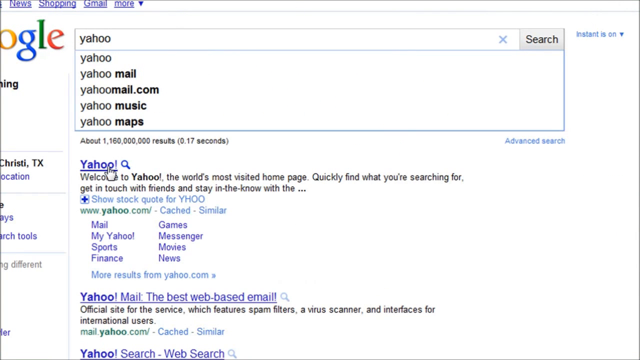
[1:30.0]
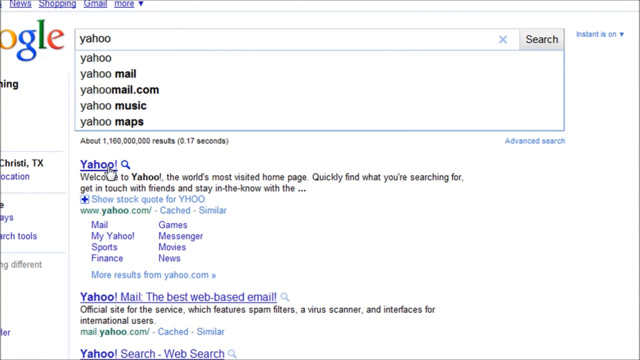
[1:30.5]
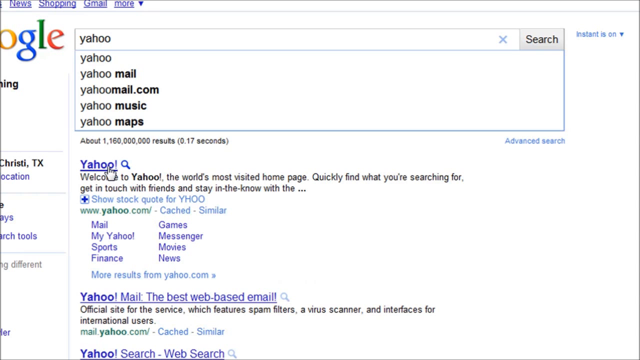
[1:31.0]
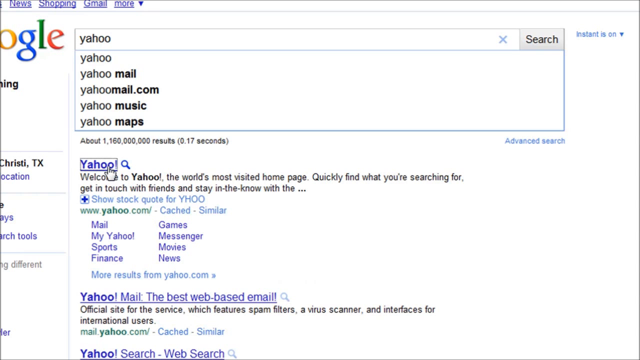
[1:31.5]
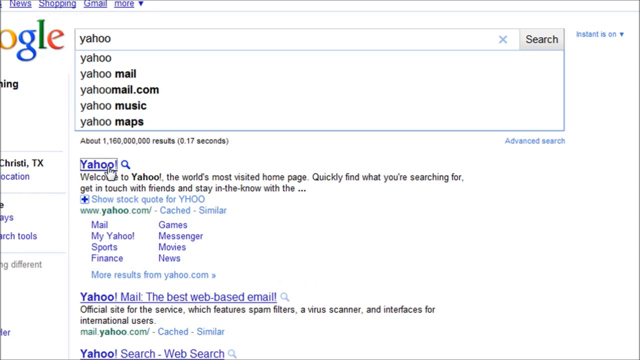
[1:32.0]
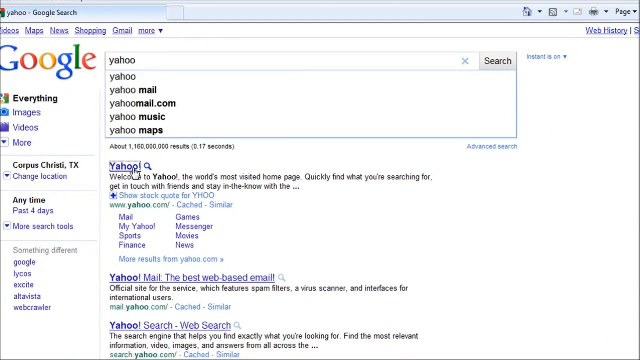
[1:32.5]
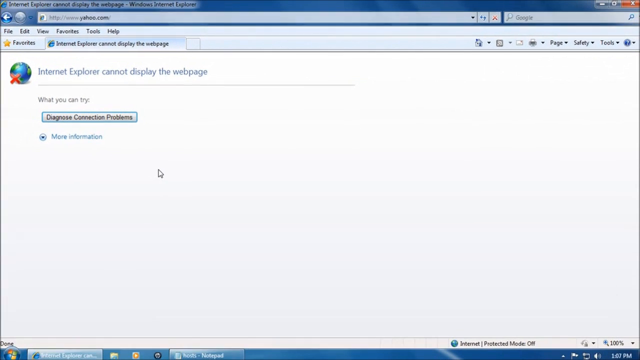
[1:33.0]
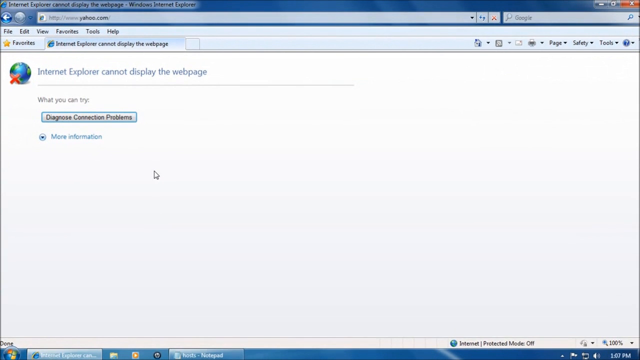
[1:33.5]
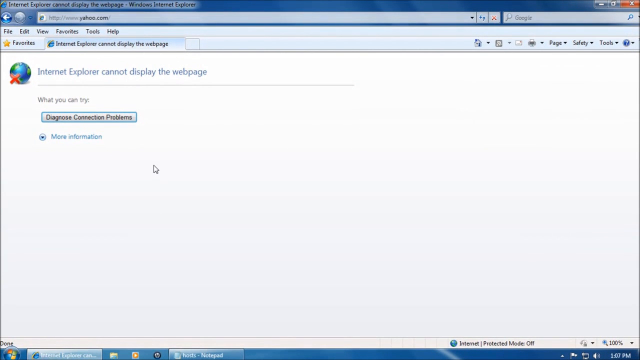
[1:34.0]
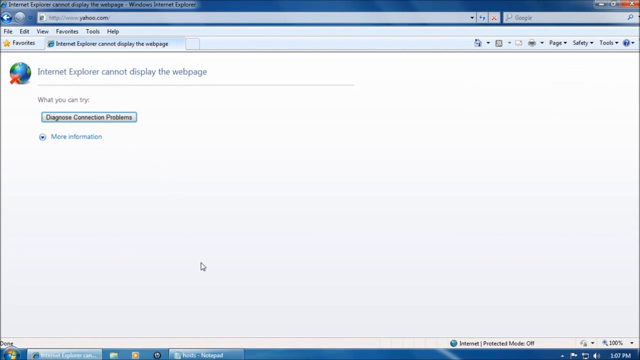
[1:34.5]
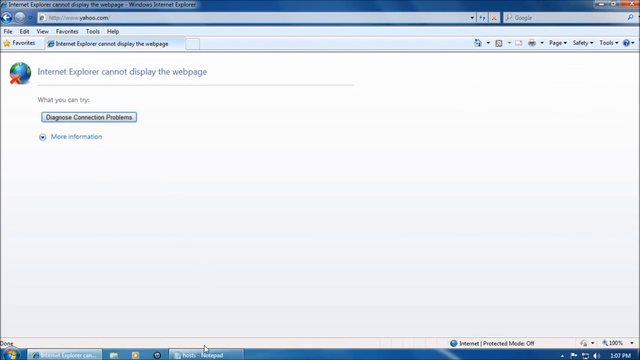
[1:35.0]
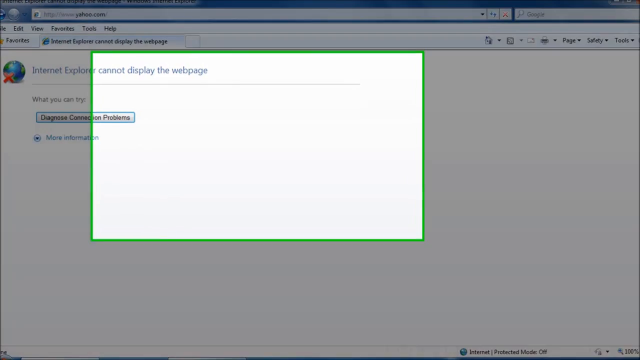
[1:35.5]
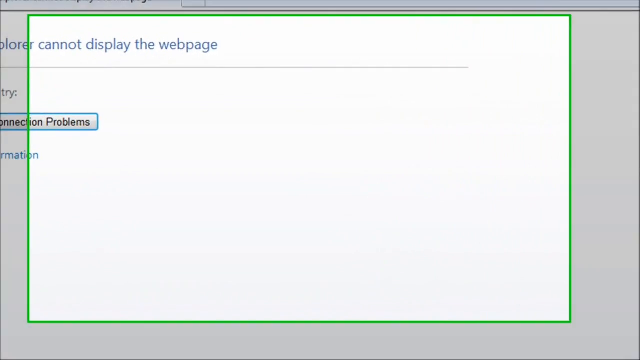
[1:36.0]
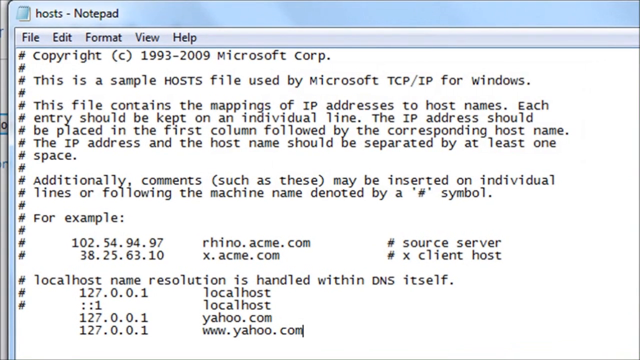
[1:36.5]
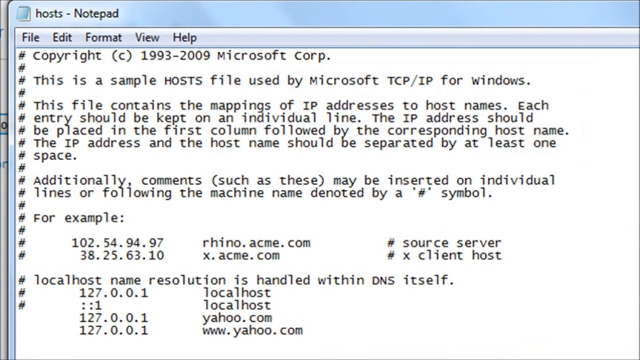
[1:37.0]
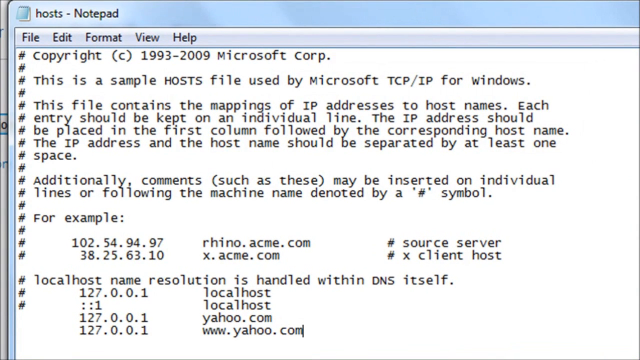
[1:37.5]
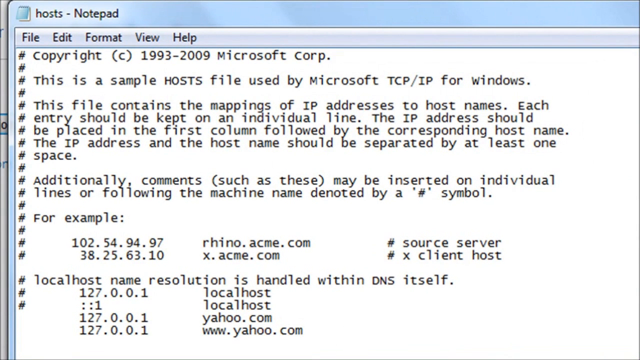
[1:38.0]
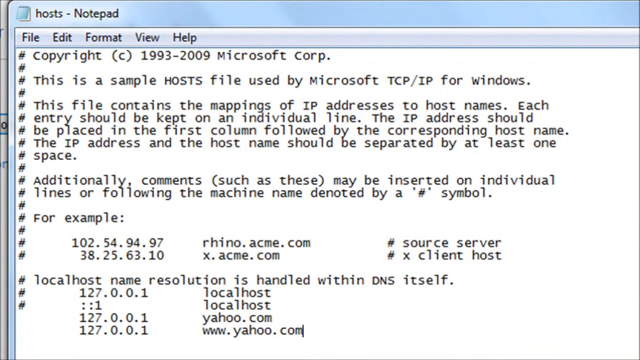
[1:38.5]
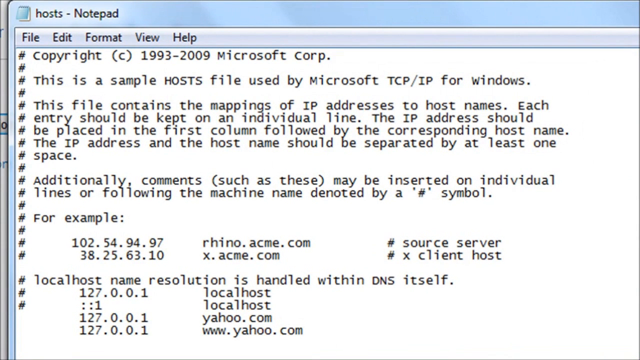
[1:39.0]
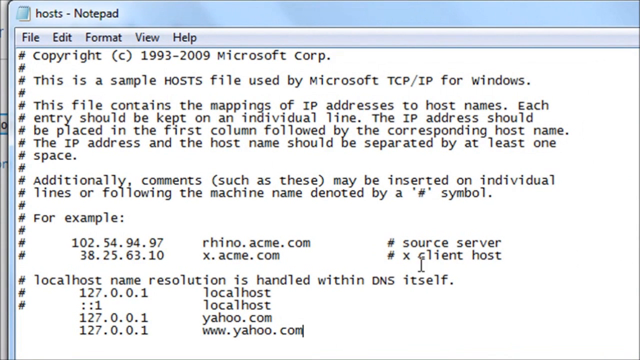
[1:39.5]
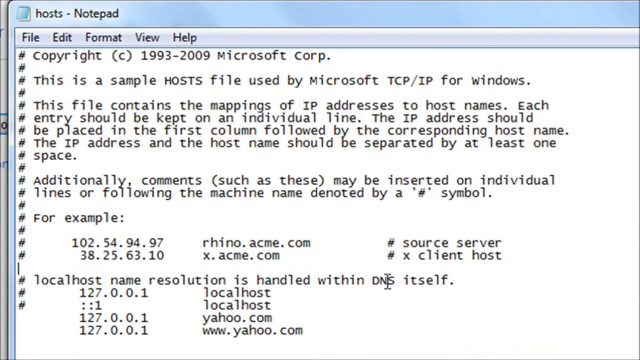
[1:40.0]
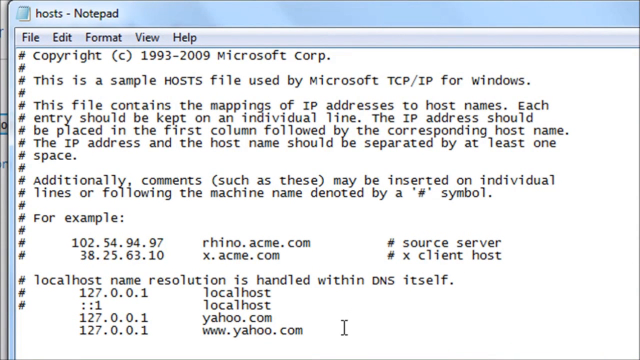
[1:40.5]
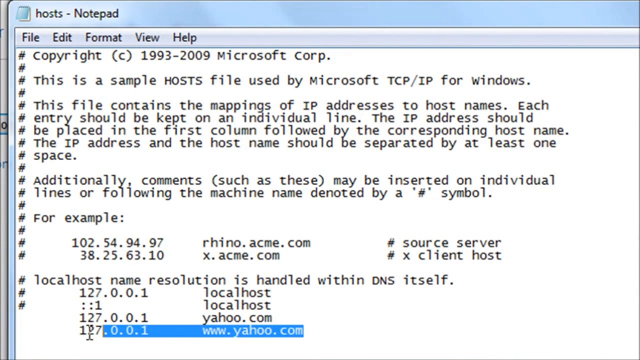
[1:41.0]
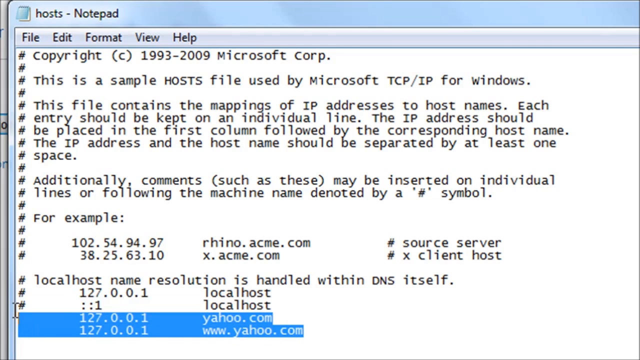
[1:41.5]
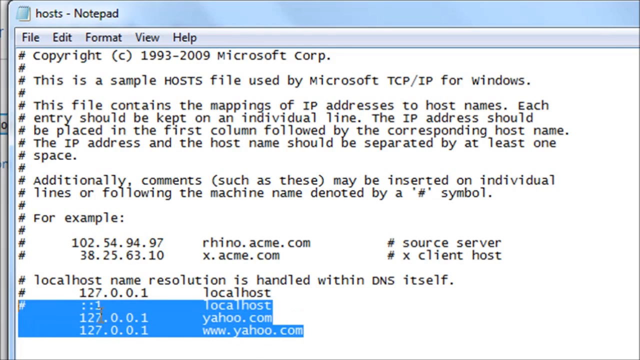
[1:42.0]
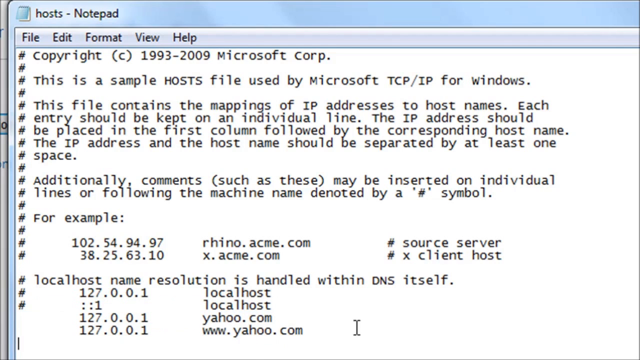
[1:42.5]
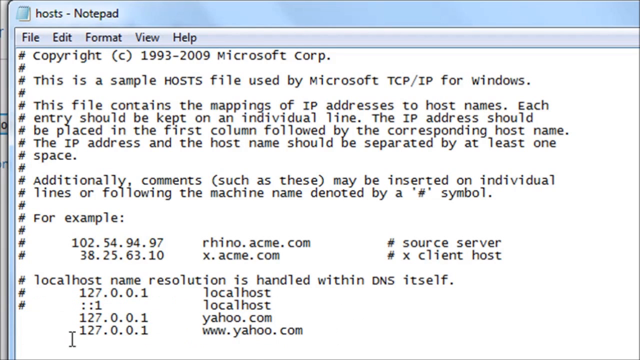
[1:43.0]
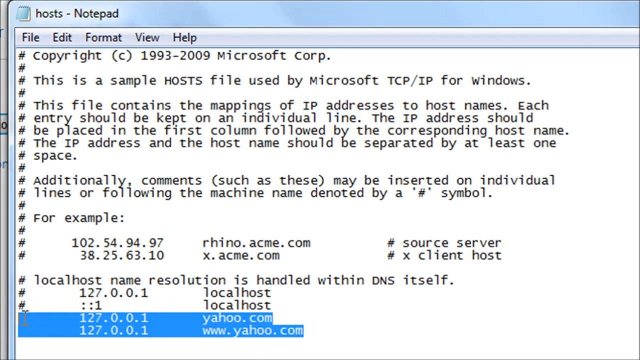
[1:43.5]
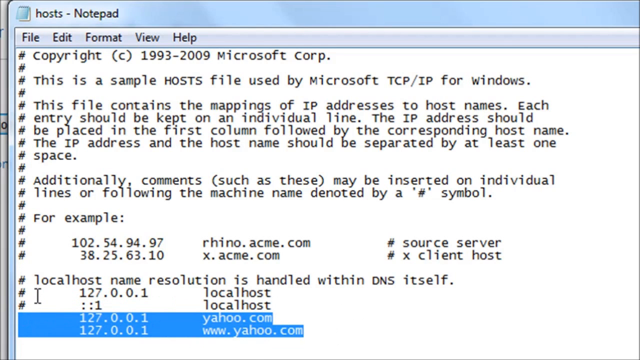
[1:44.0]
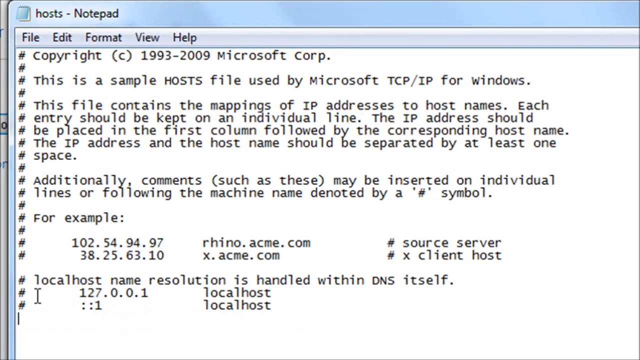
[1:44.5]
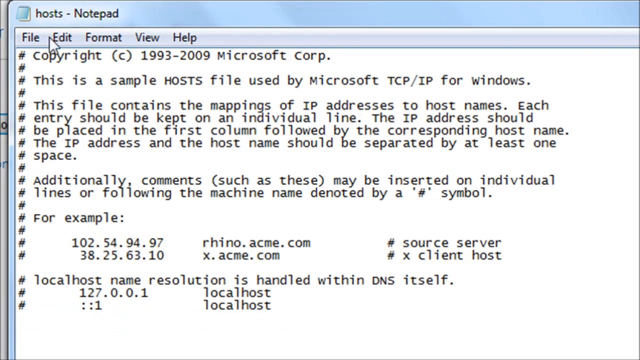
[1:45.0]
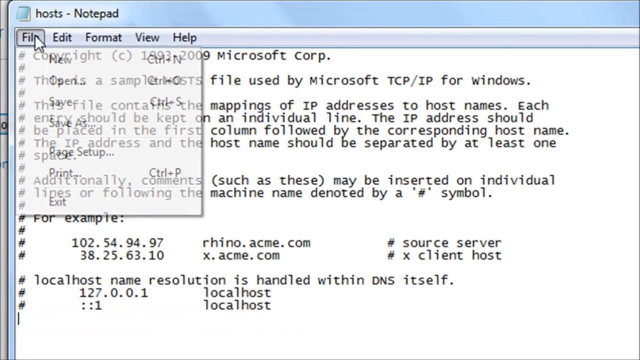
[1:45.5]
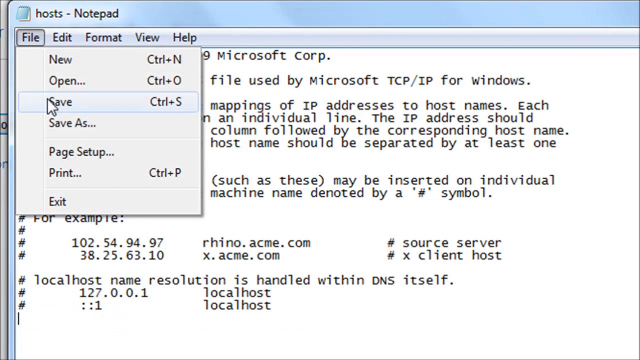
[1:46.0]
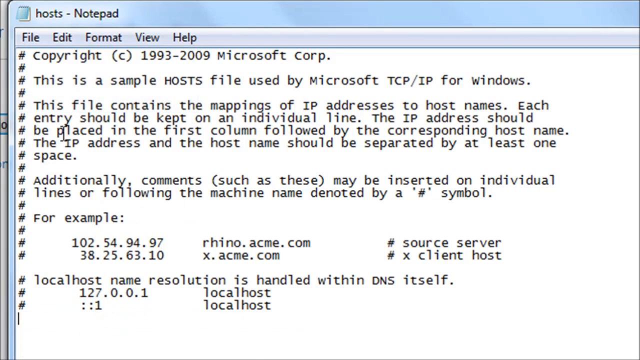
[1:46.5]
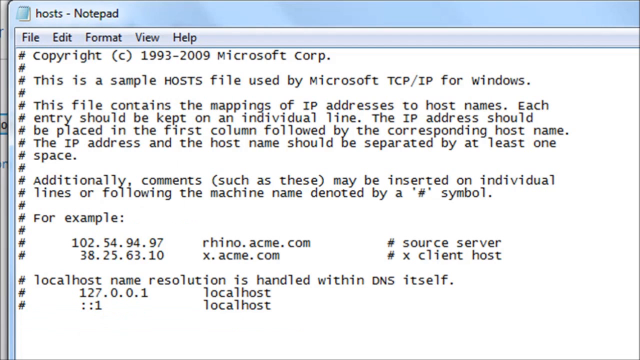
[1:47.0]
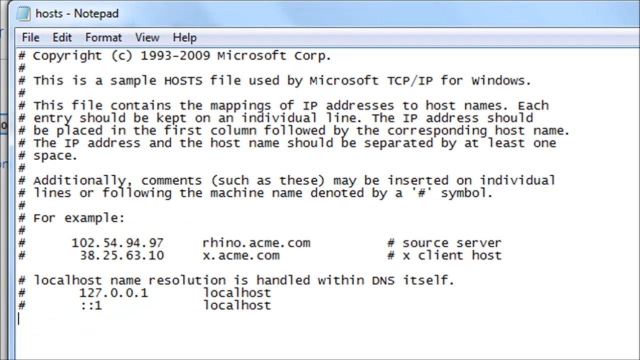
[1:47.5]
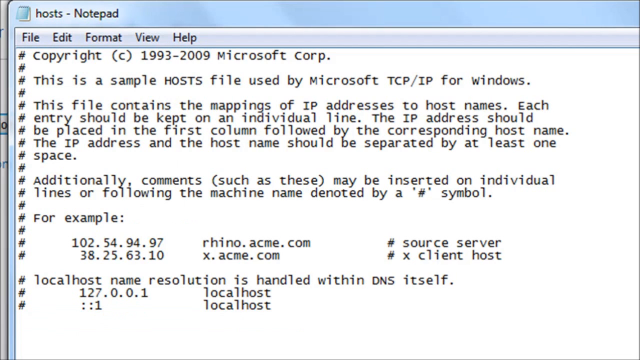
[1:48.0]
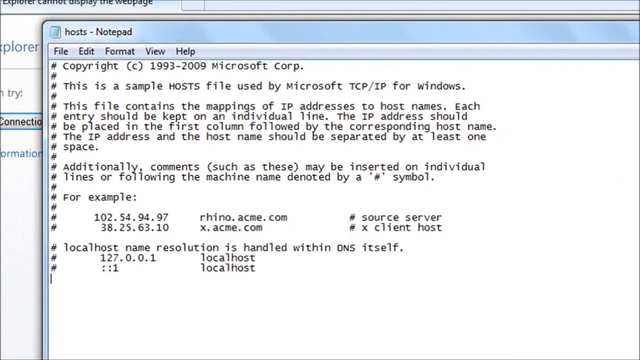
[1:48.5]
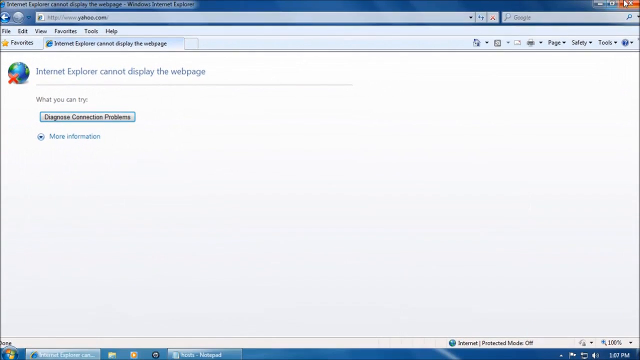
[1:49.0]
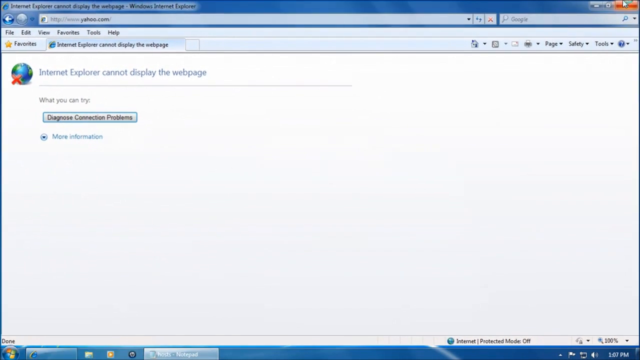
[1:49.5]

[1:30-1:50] Clicking the Yahoo link on the results page does not work. The saved Notepad file is opened again, the added code is selected and erased, and the file is saved. Back in the browser, "yahoo" is searched again and the same results appear: "the world's most visited homepage, quickly find what you're searching for", with Mail, My Yahoo, Sports, Finance, Games, Messenger, Movies and News, and more results from yahoo.com.